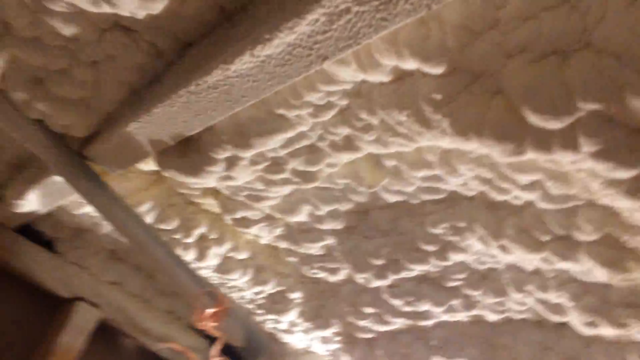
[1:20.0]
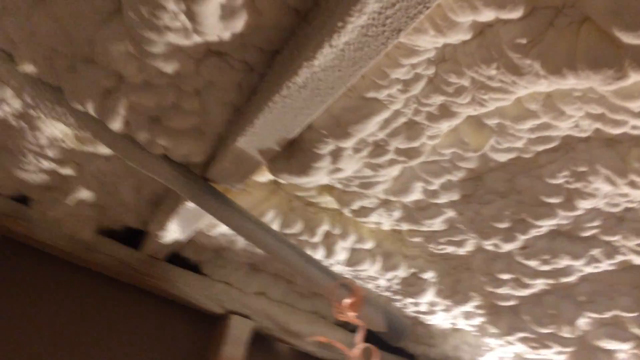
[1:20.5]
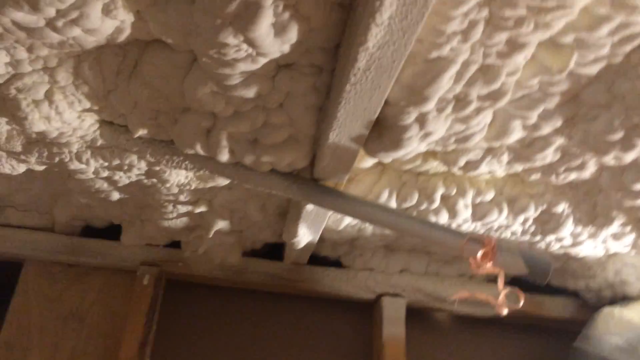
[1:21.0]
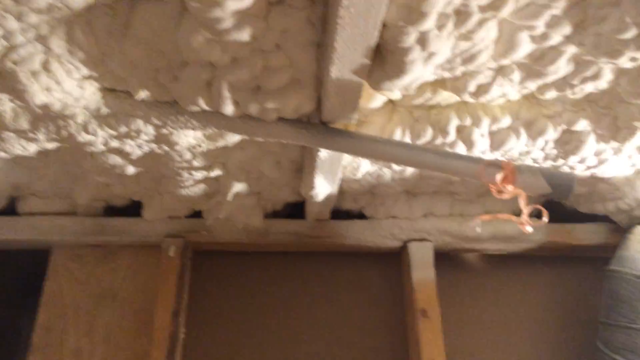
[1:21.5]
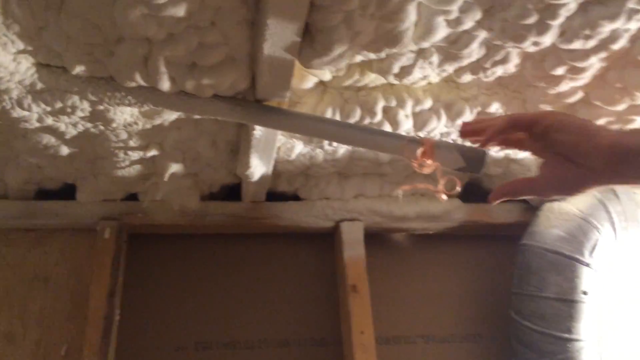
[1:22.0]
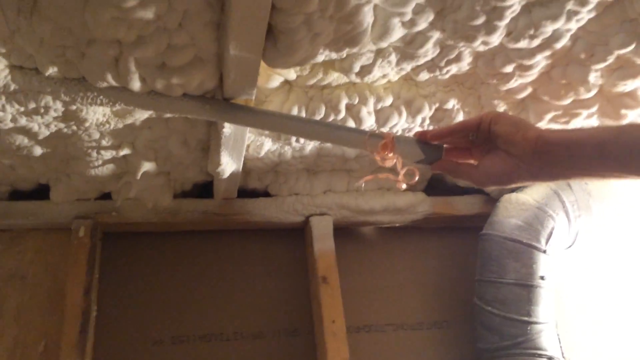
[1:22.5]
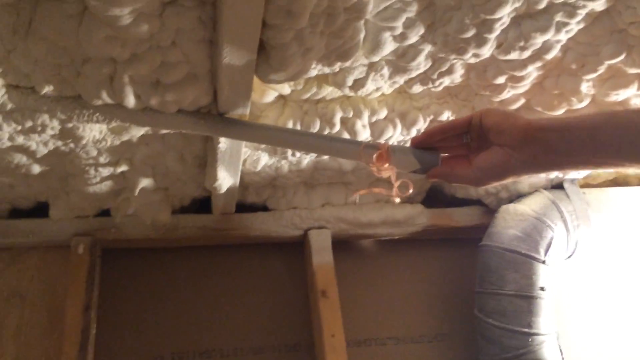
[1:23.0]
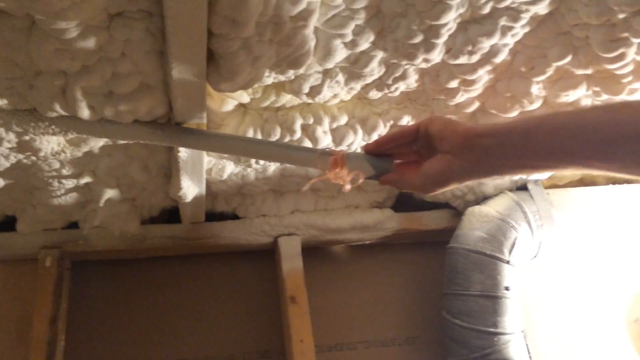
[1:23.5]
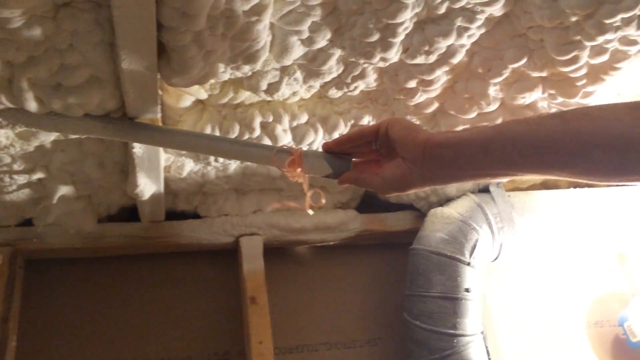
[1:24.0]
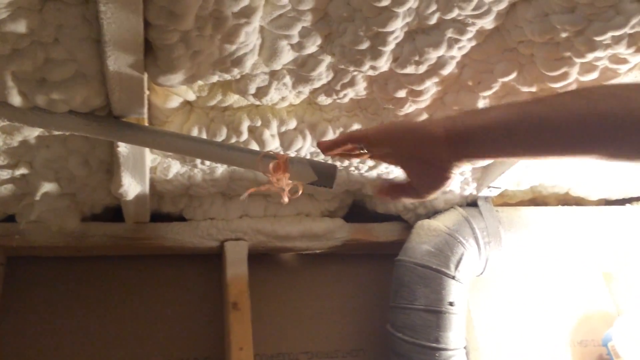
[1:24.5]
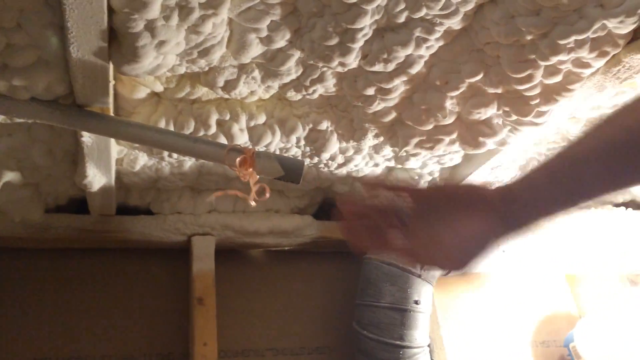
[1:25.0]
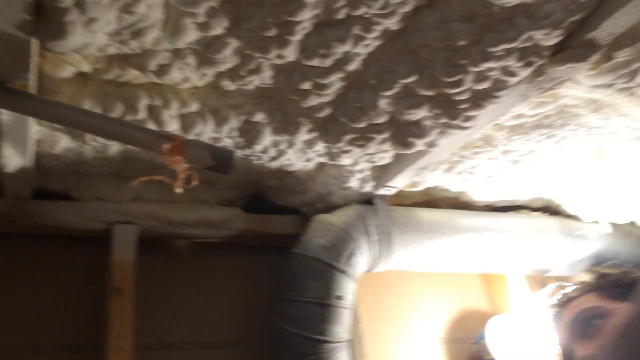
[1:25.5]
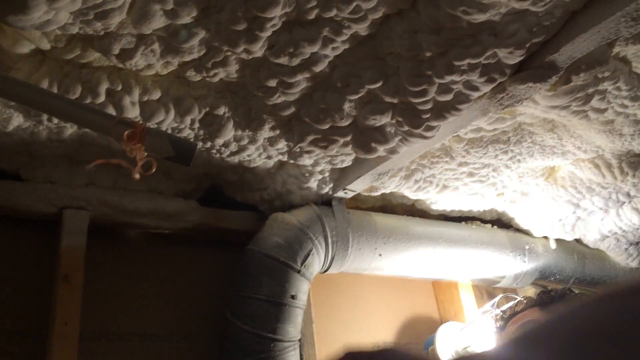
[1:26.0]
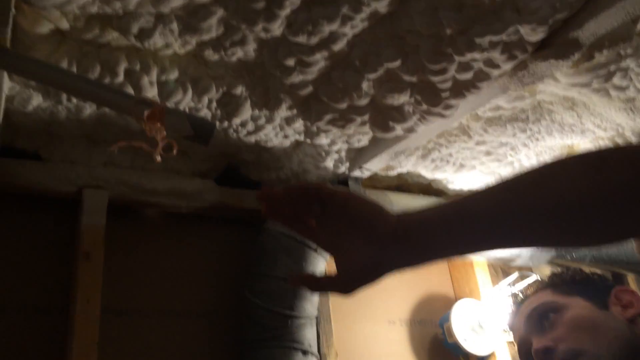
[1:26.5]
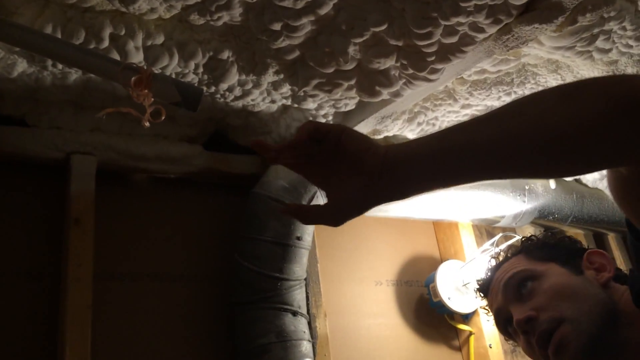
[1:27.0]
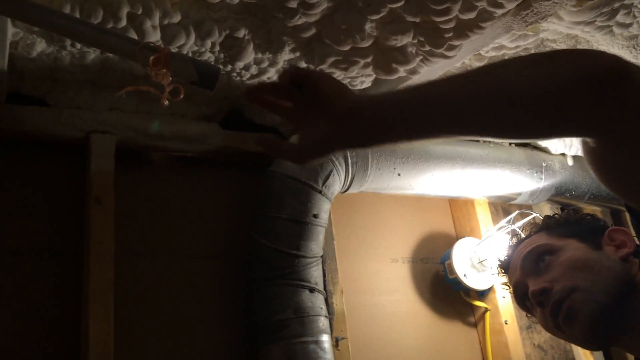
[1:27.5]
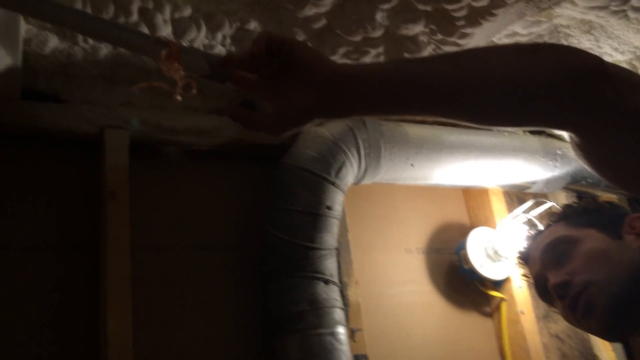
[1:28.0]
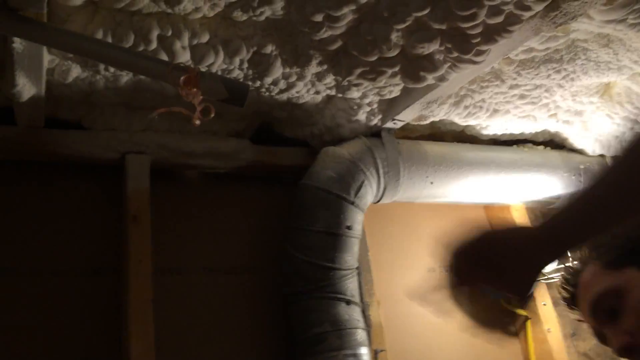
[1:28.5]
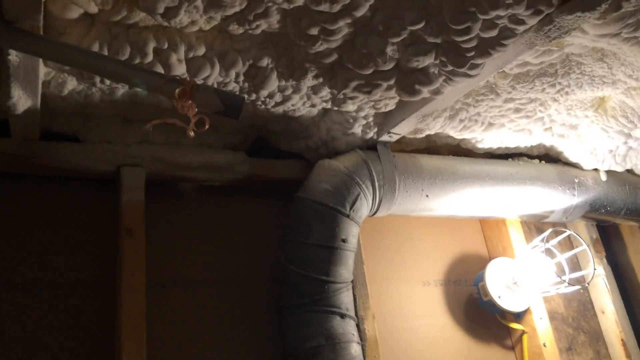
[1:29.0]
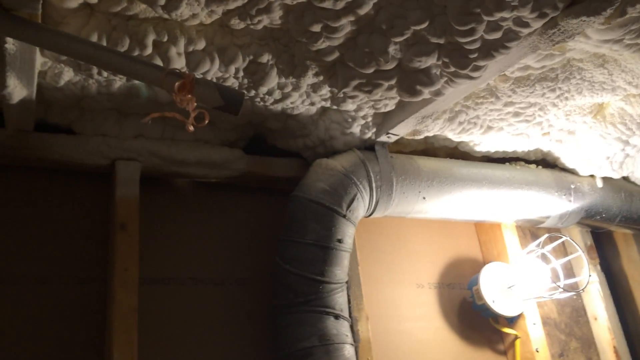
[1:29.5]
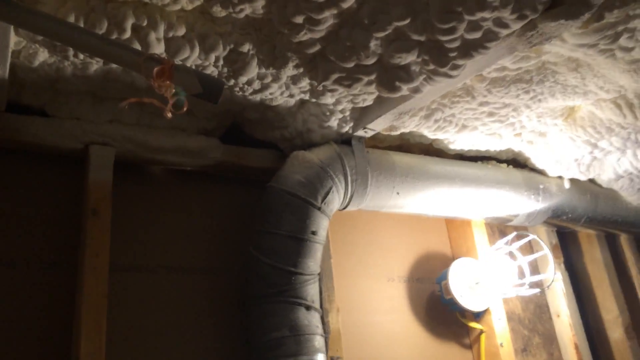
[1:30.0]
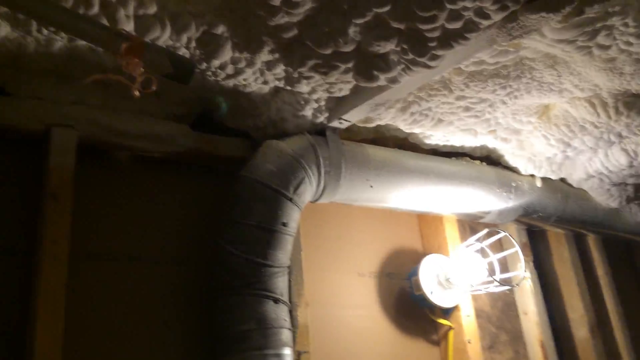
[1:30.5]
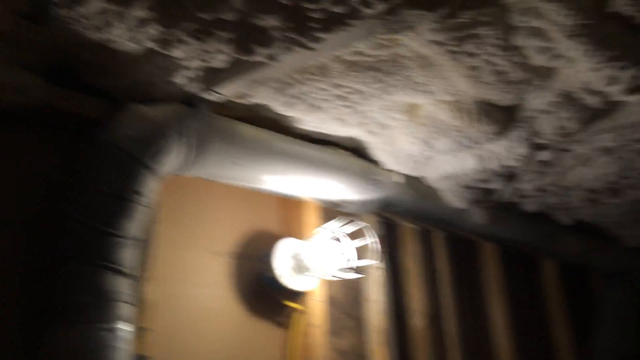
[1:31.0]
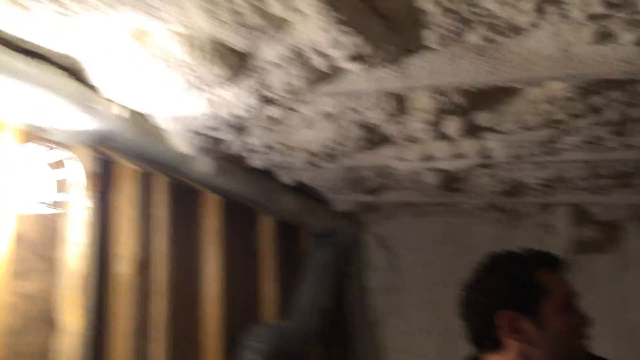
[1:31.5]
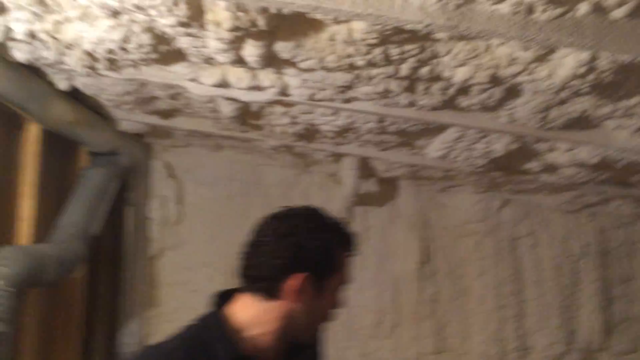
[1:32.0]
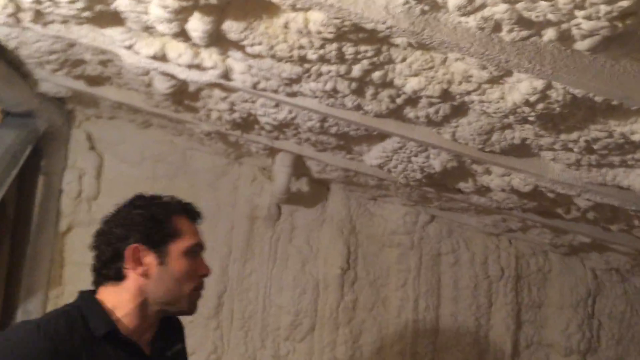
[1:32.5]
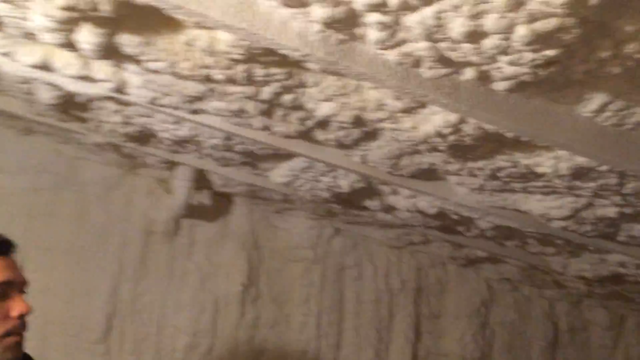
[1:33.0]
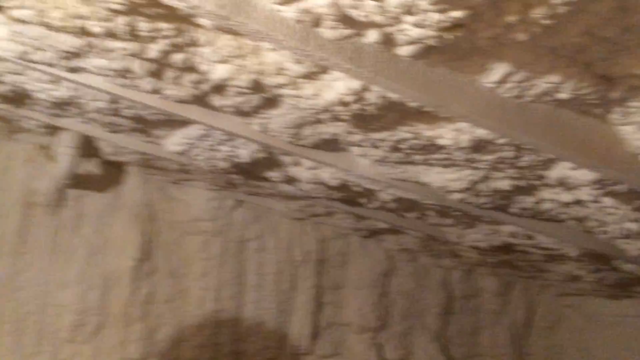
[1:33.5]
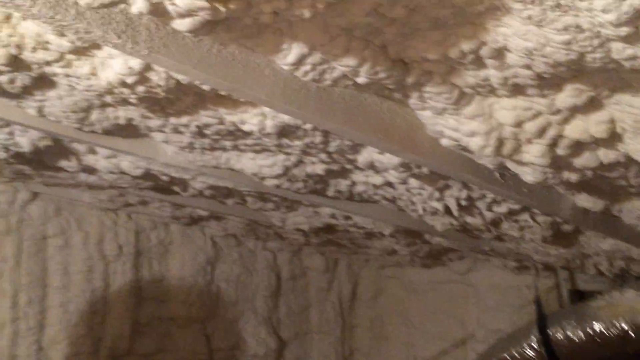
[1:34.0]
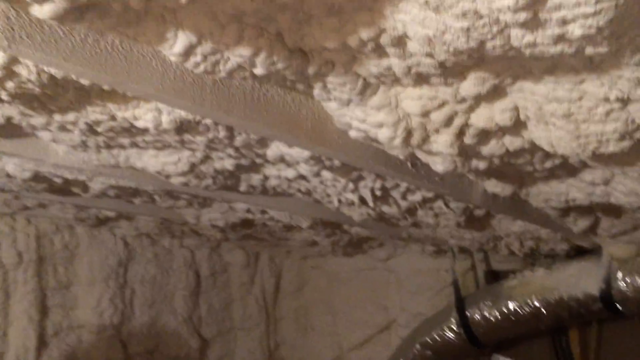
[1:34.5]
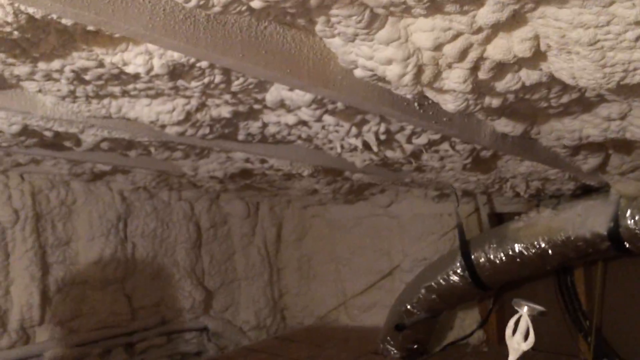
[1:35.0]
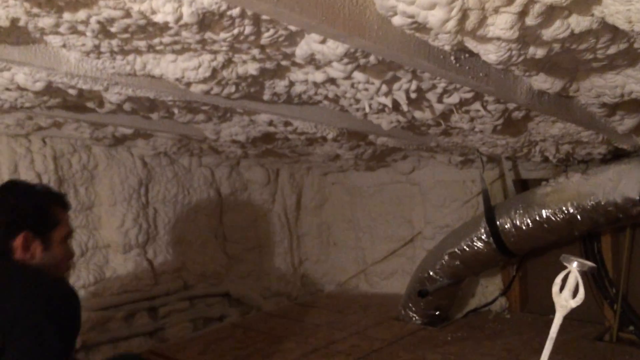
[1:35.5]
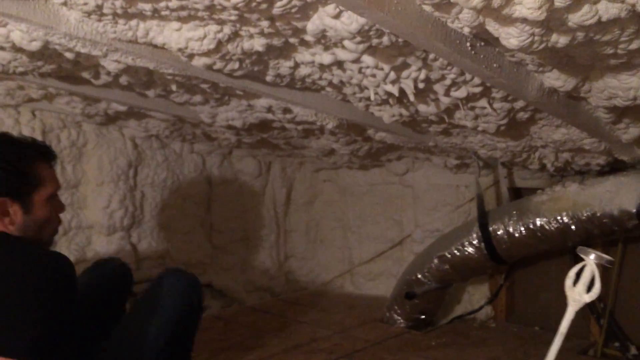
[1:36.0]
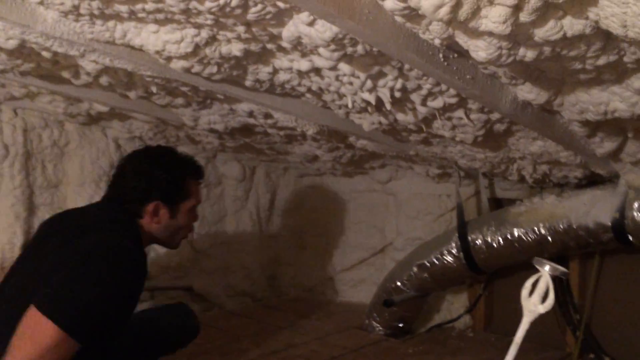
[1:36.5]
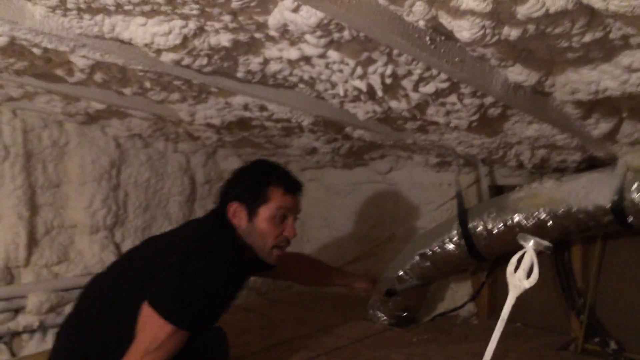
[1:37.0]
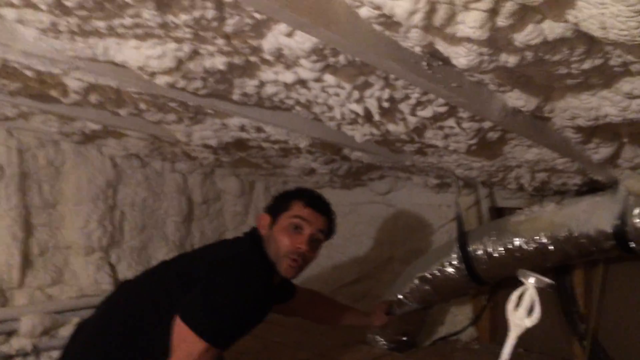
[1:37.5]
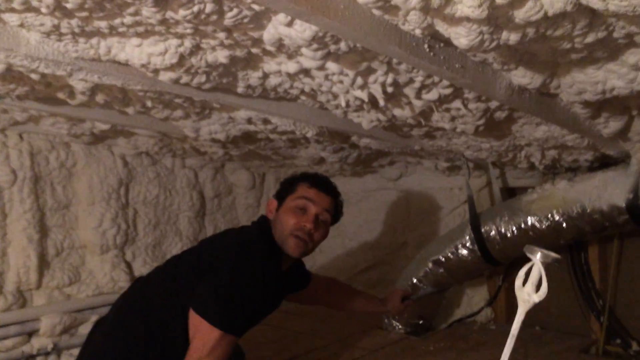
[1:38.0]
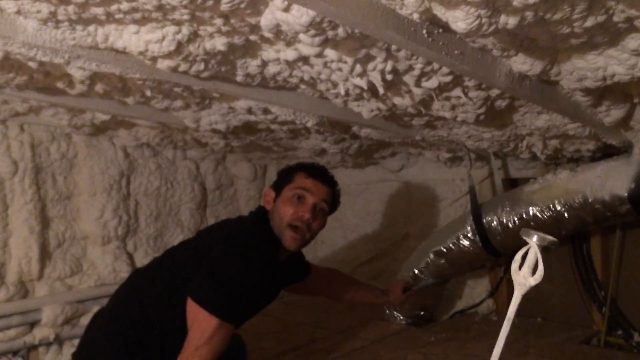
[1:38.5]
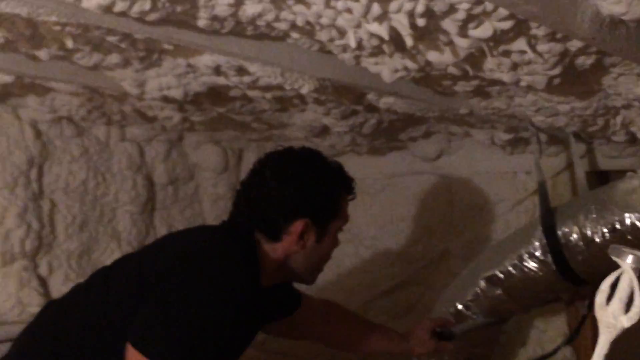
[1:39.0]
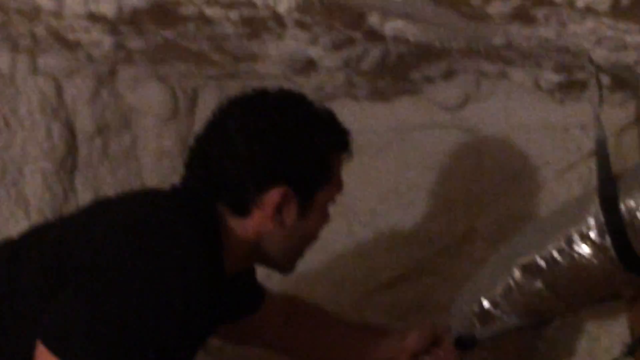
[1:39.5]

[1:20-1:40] A sort of streamline pipe is attached to the ceiling and runs continuously, coming from outside. The ceiling inside is not covered with anything, and neither are the floors. The room looks like it is not yet ready to be used and is still under construction. The man is not visible much; the shot mostly shows the pipe.